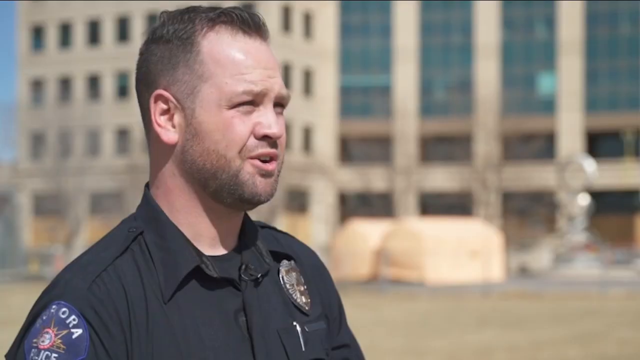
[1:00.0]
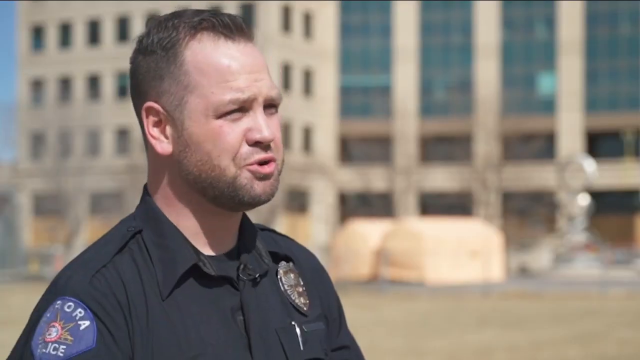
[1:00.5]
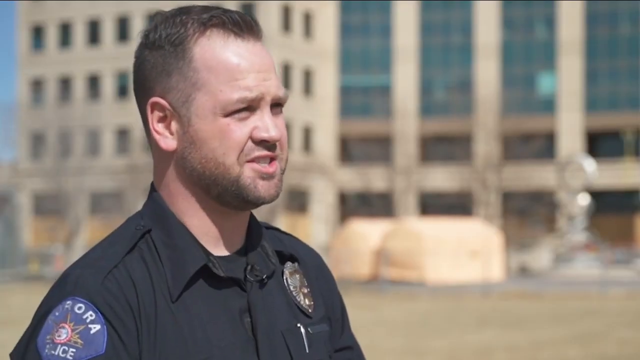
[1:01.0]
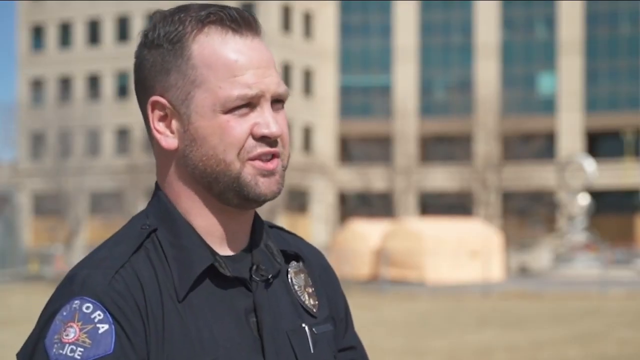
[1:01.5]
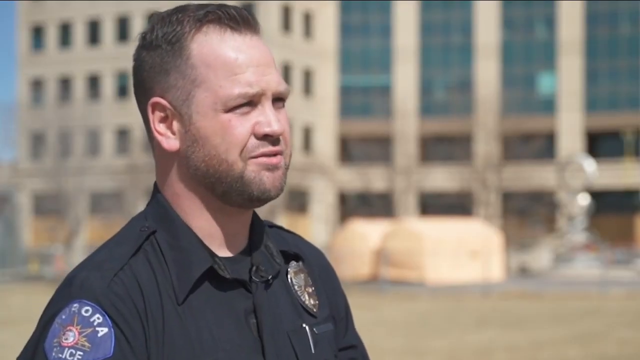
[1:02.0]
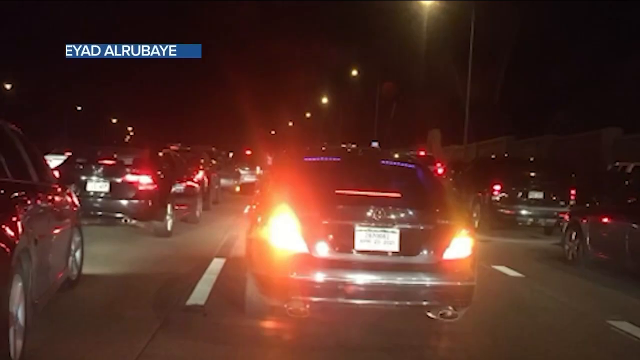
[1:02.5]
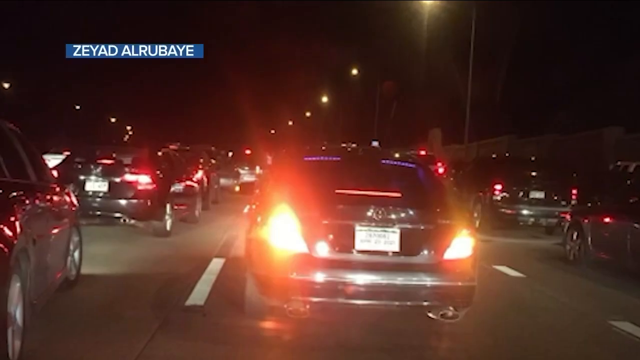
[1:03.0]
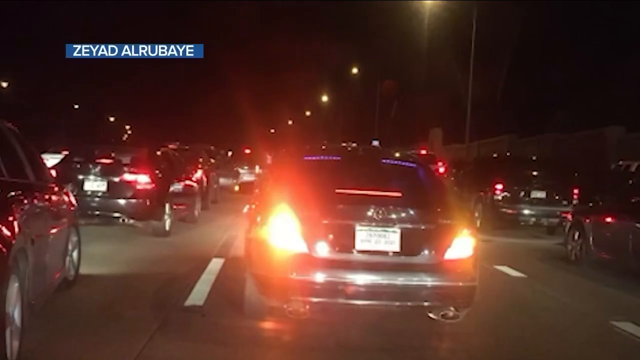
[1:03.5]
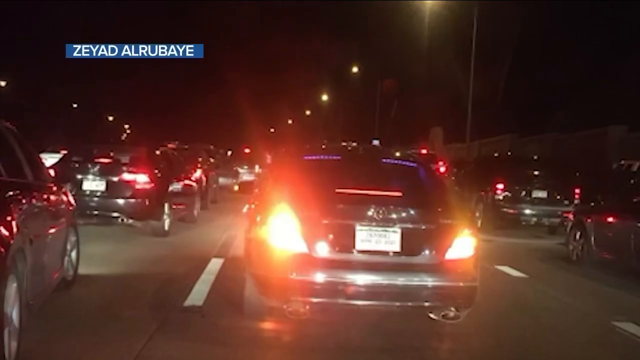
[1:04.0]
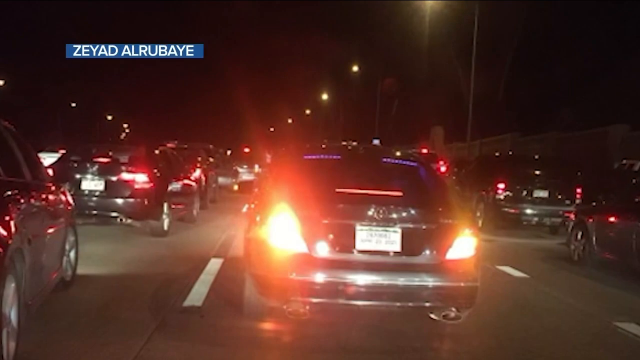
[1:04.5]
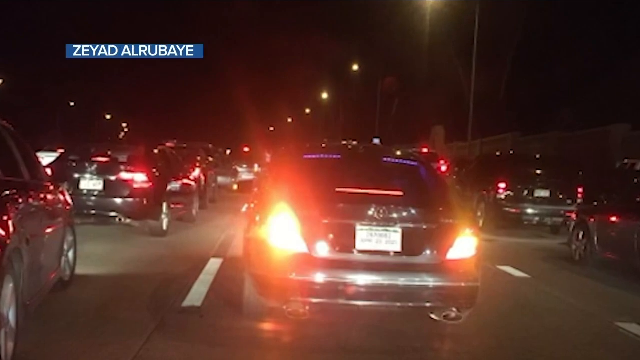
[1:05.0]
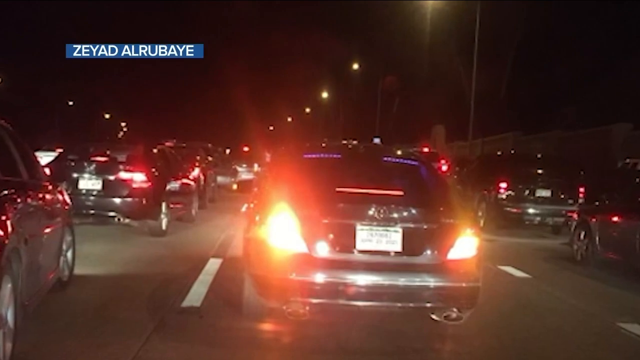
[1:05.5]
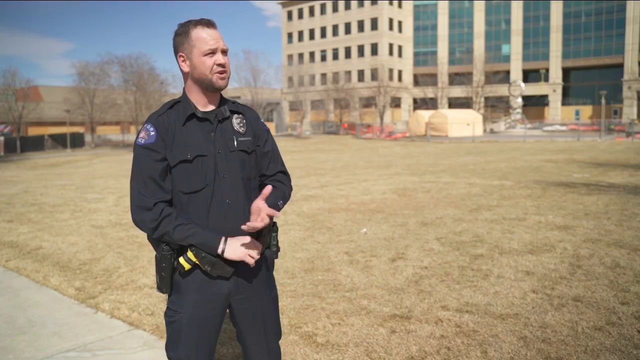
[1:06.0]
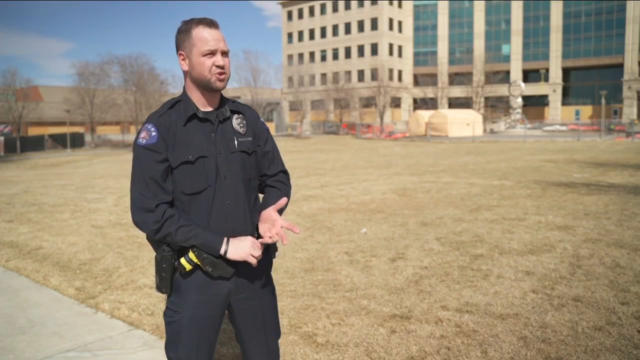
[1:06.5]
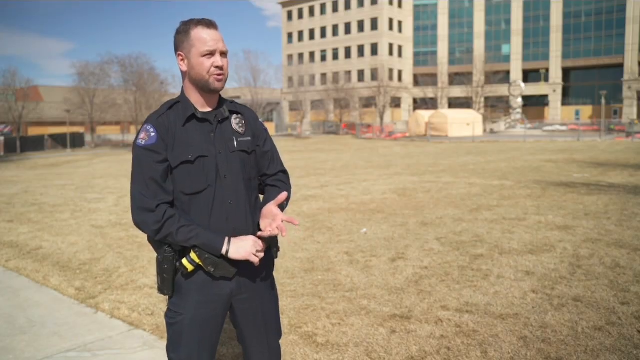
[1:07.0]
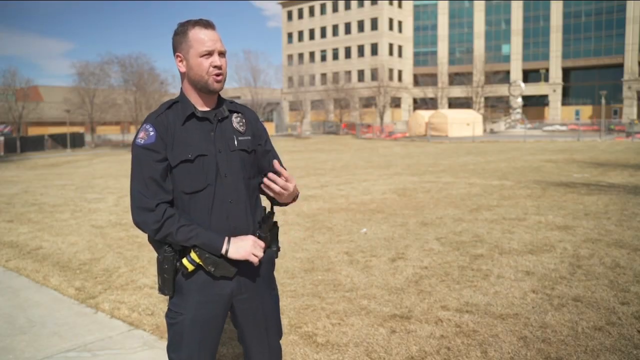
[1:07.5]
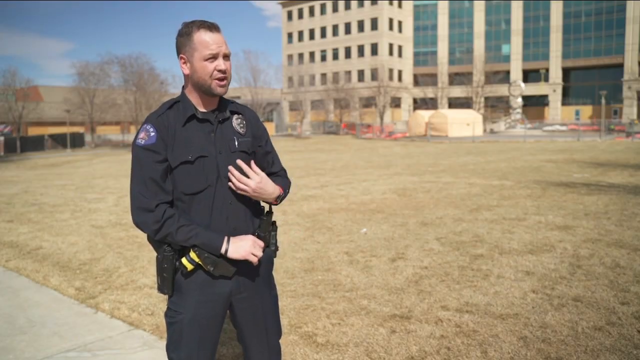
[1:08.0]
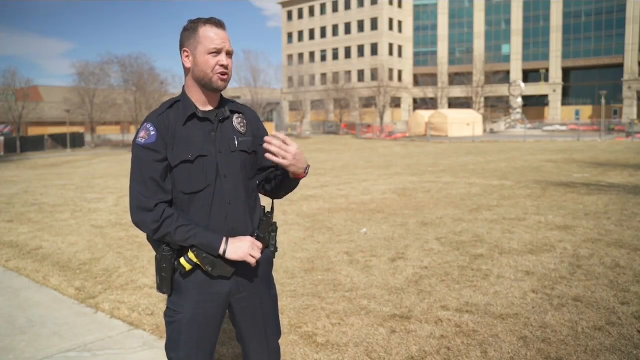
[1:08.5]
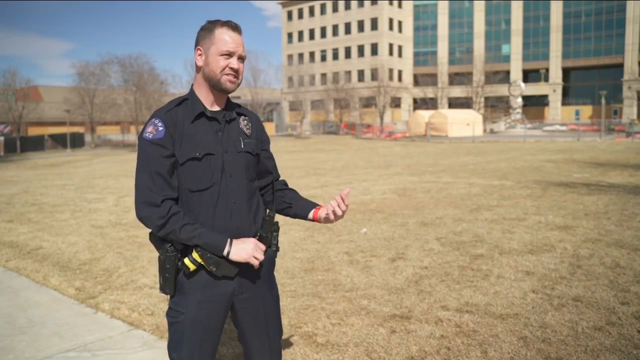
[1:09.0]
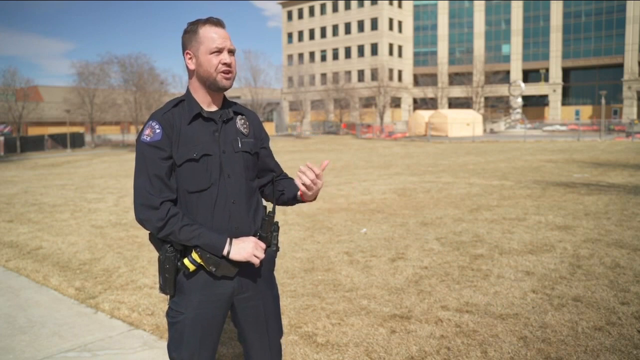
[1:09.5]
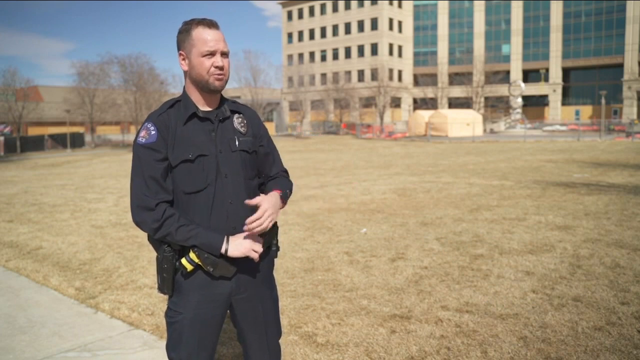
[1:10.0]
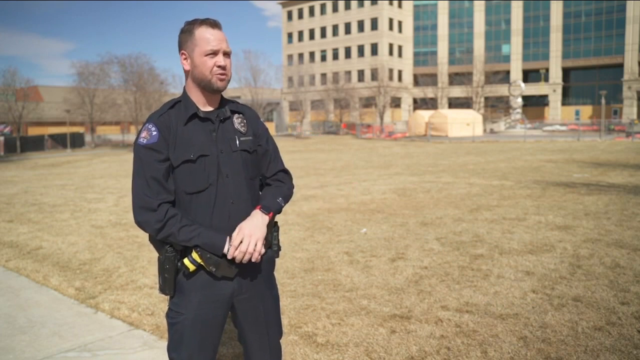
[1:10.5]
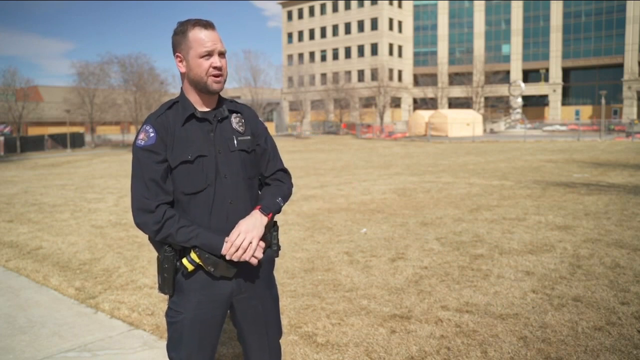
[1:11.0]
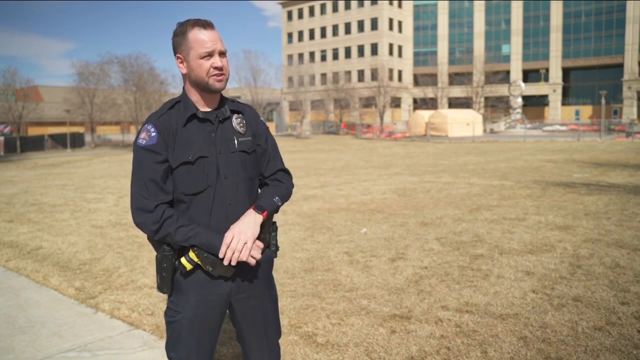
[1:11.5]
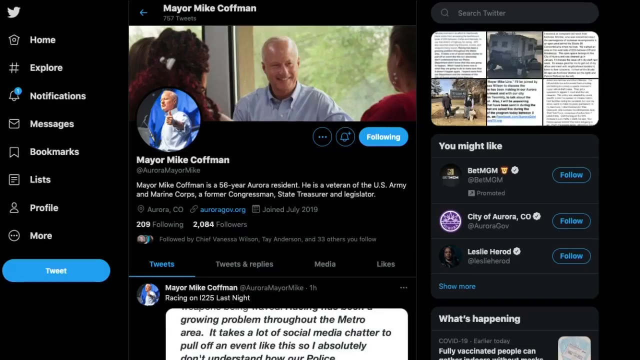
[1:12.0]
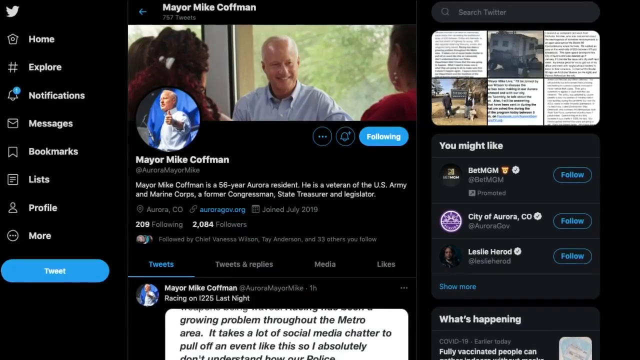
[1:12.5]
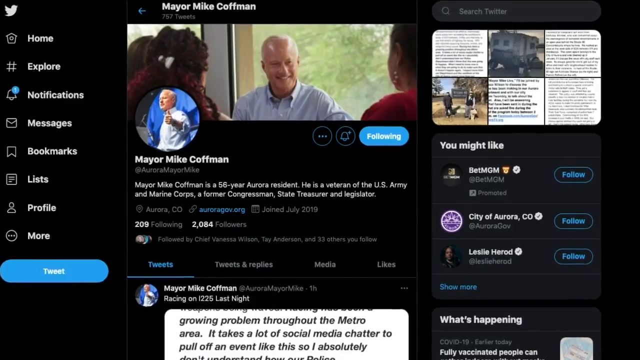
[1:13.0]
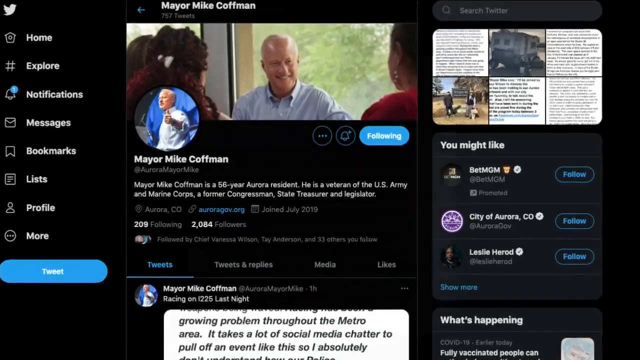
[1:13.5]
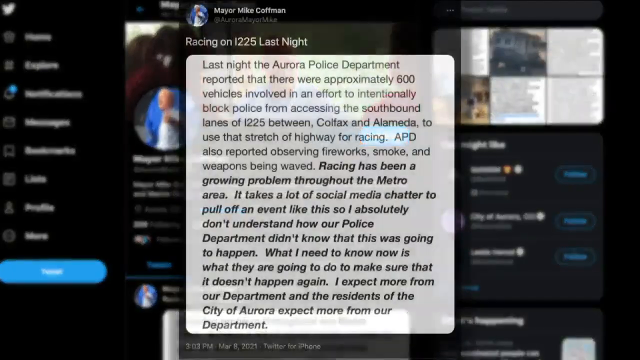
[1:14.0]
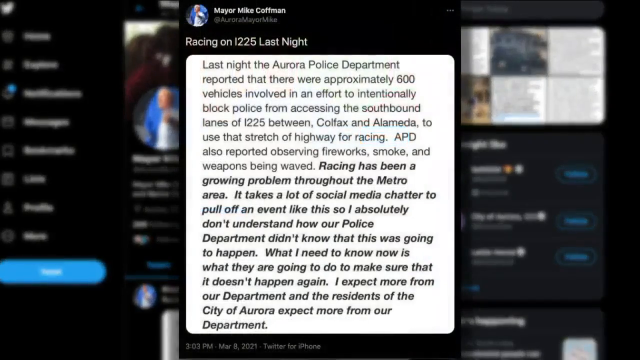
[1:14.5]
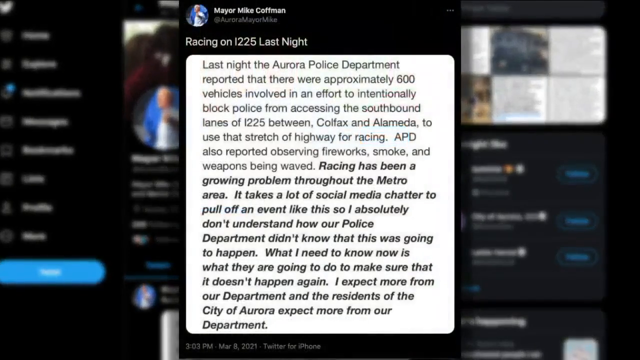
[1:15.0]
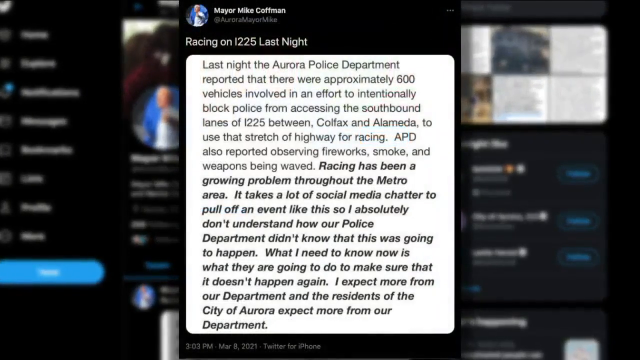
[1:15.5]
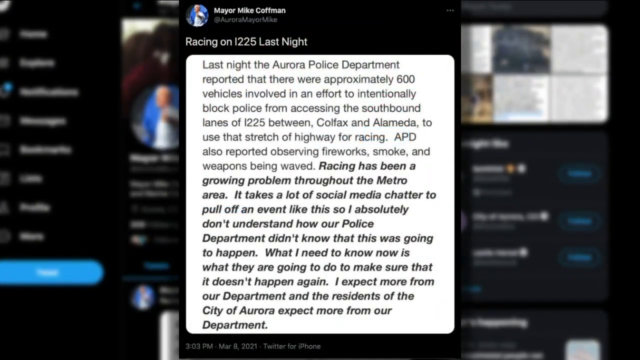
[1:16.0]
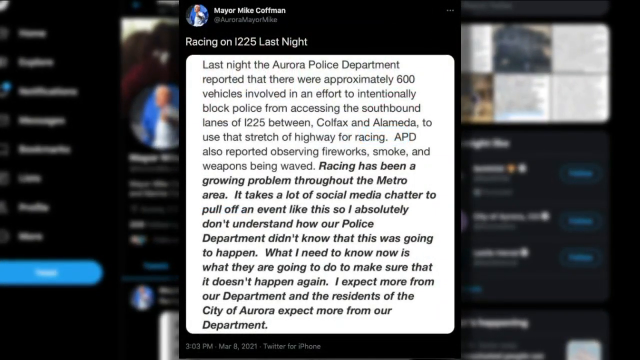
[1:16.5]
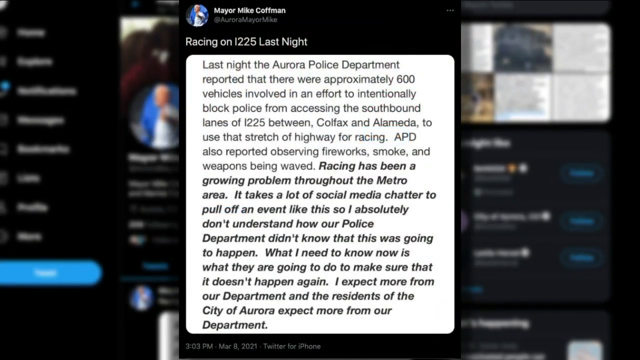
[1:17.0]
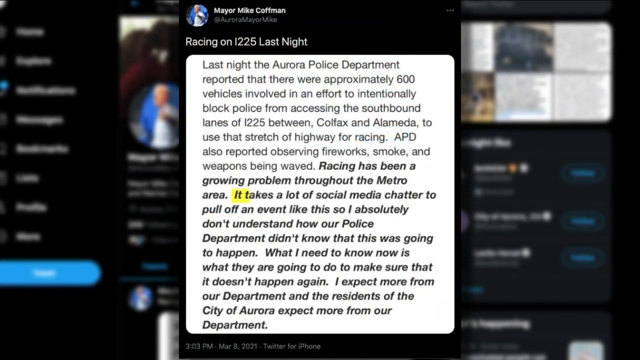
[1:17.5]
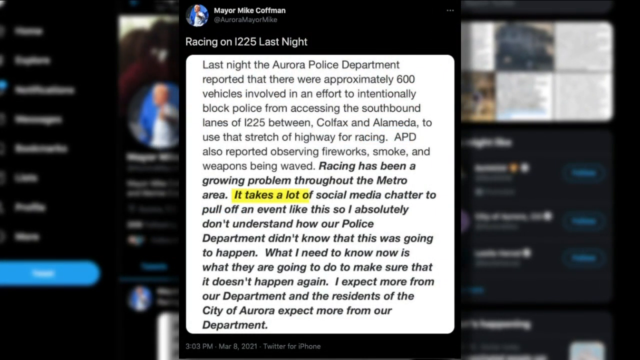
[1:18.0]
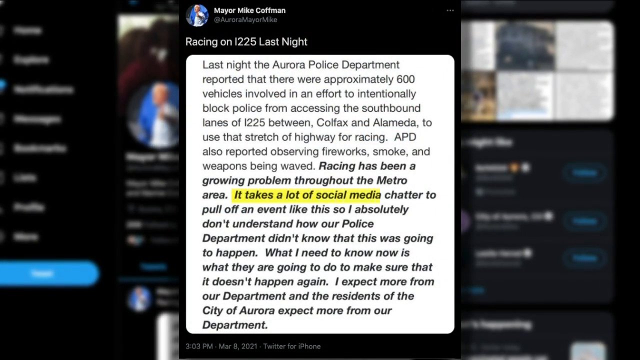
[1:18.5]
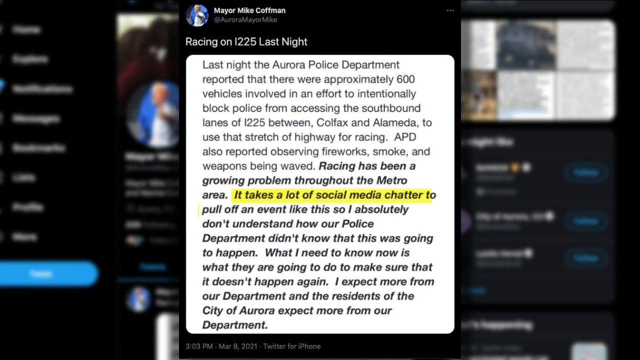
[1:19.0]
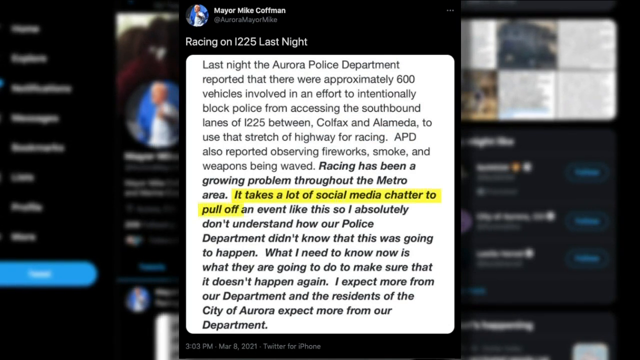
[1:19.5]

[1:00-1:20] The police officer continues to talk, and the shot changes to show him from the shoulders up. The scene transitions to the backs of cars with their taillights lit up as the camera zooms in. Next, the police officer stands outside a building with lots of dead grass behind him, talking and gesturing a lot with his hands. The scene then shows the Twitter website, specifically Mayor Mike Coffman's profile page. The camera zooms in and a tweet appears center screen in a pop-up; it mentions racing on I225 last night, along with a summary of the event and the mayor's thoughts on the matter. The camera zooms in further and the text "It takes a lot of social media chatter to pull off an event like this" is highlighted in yellow.